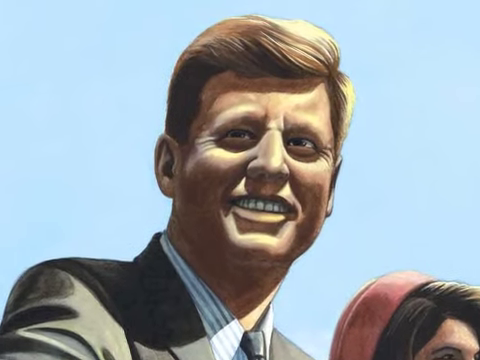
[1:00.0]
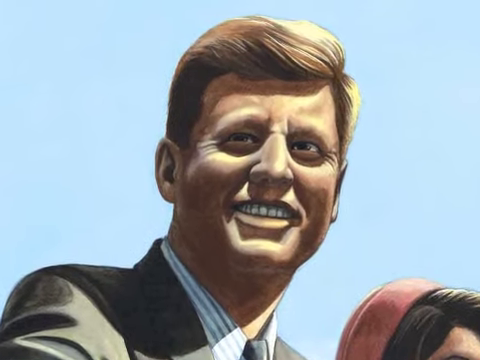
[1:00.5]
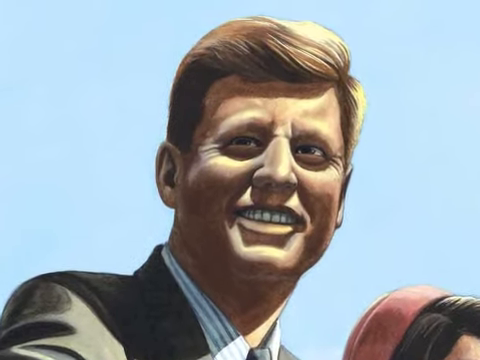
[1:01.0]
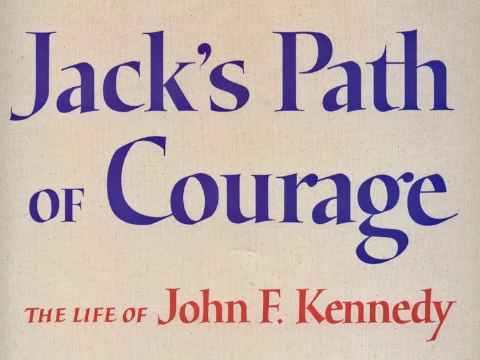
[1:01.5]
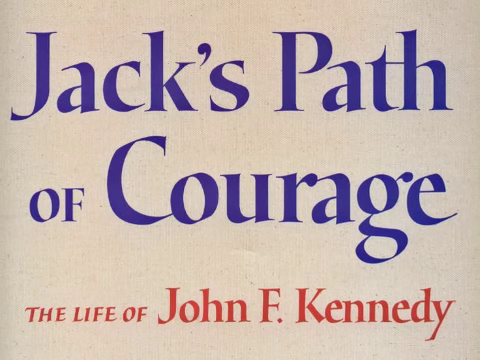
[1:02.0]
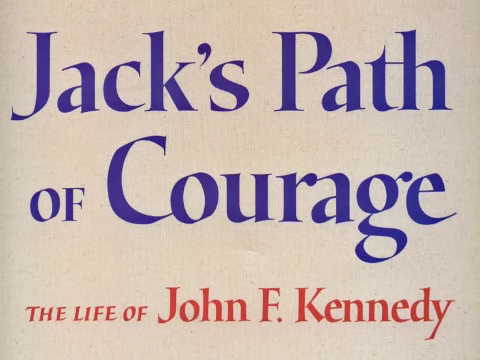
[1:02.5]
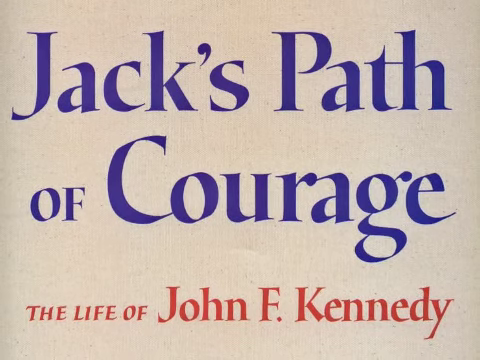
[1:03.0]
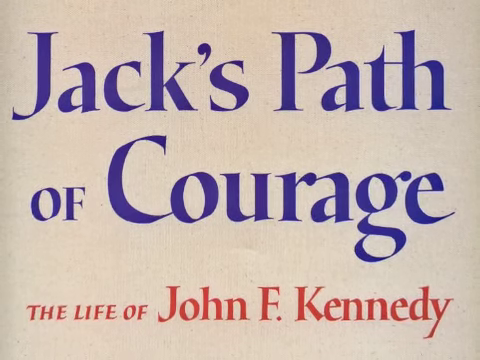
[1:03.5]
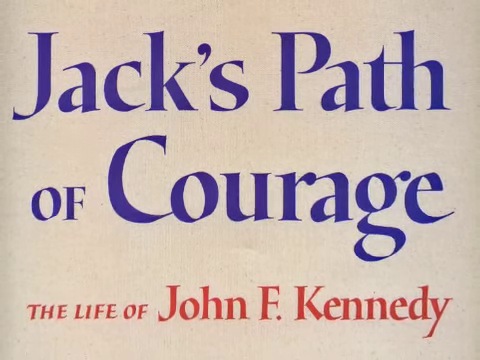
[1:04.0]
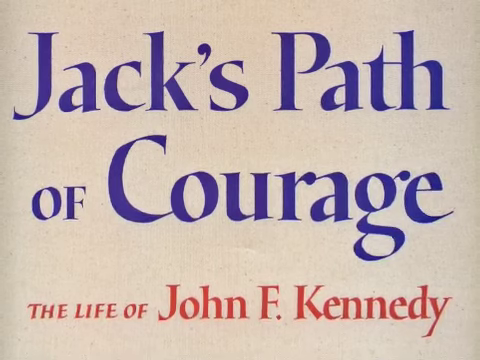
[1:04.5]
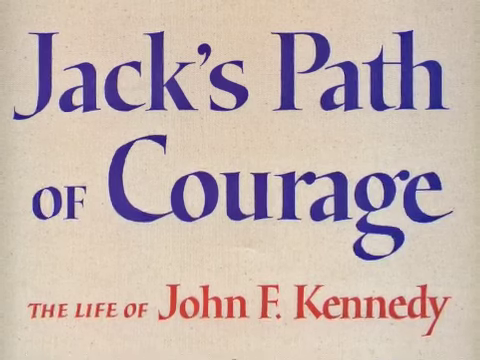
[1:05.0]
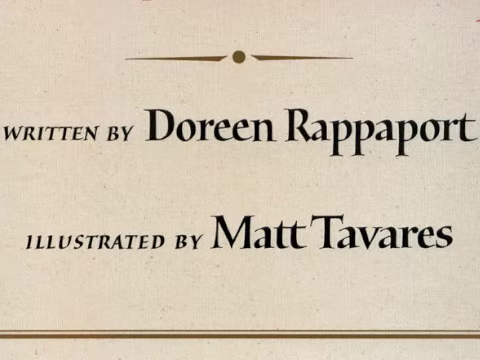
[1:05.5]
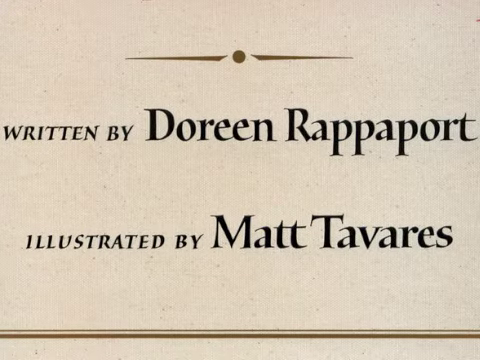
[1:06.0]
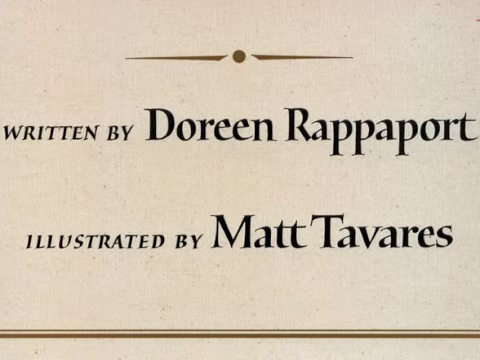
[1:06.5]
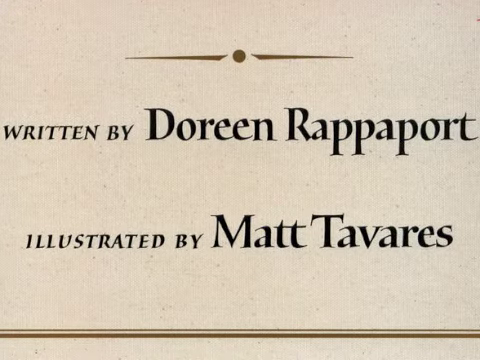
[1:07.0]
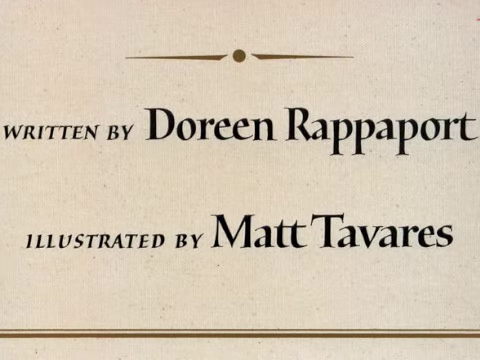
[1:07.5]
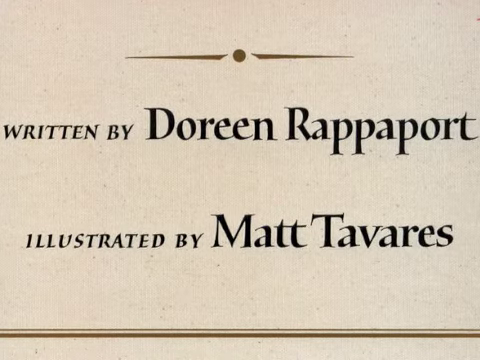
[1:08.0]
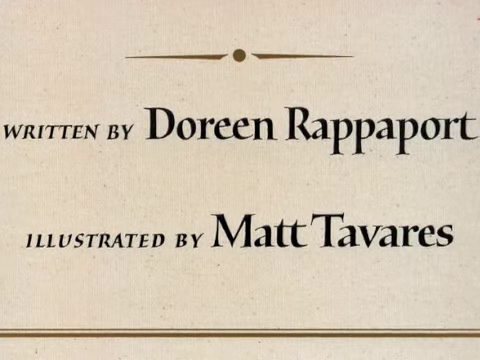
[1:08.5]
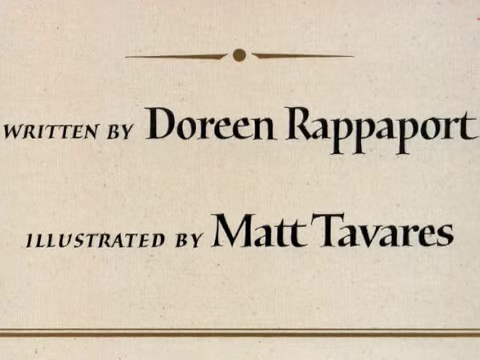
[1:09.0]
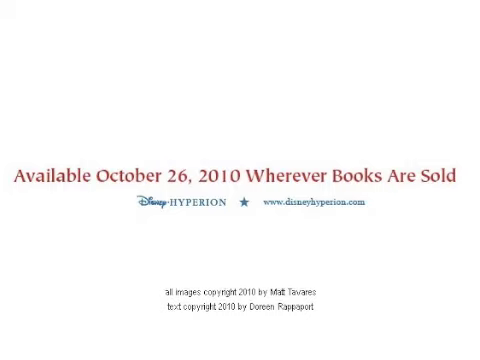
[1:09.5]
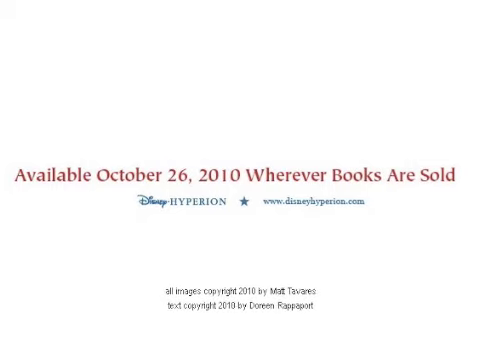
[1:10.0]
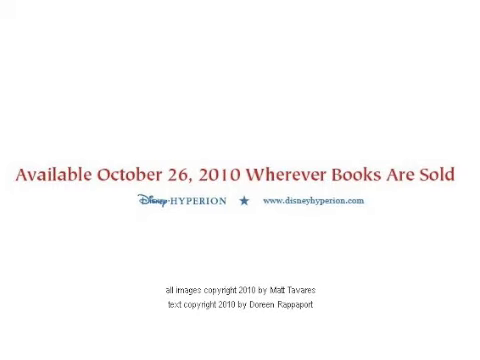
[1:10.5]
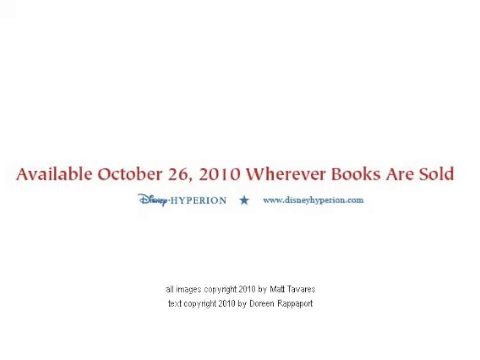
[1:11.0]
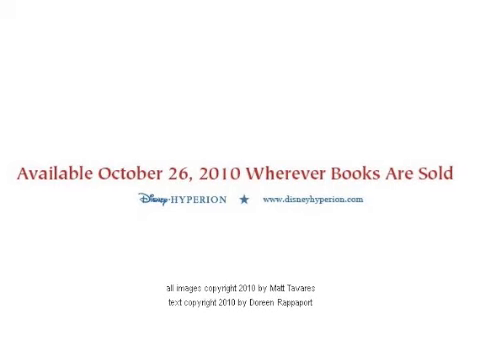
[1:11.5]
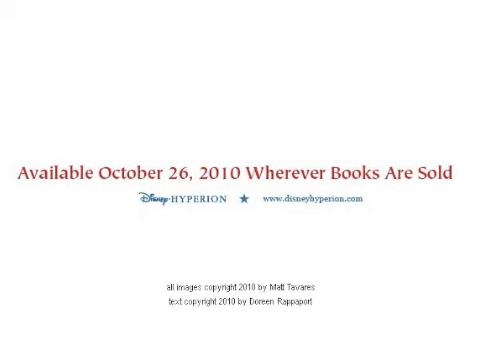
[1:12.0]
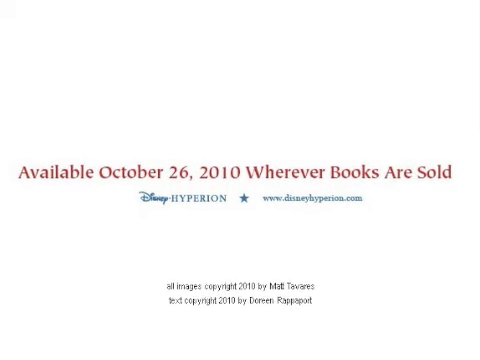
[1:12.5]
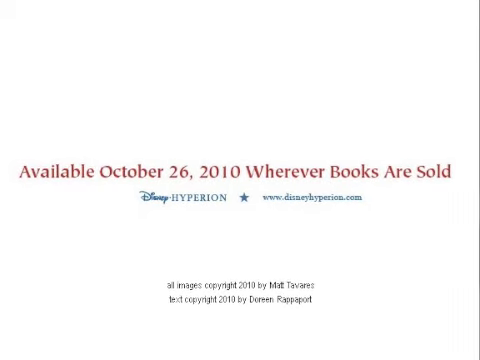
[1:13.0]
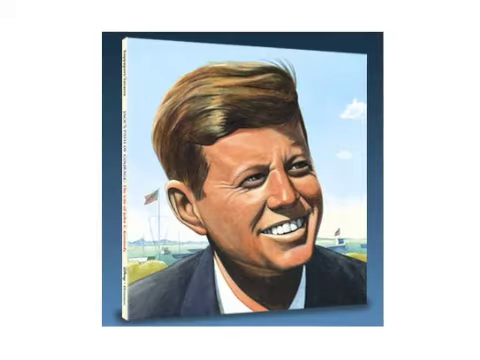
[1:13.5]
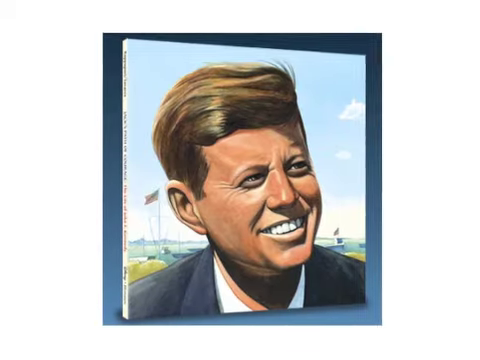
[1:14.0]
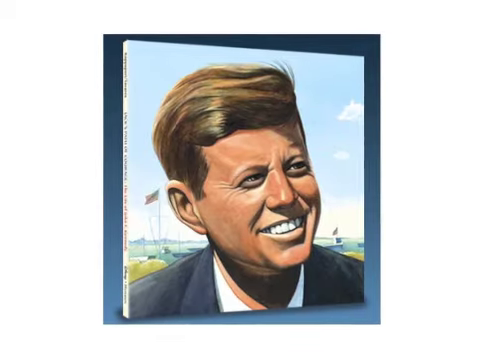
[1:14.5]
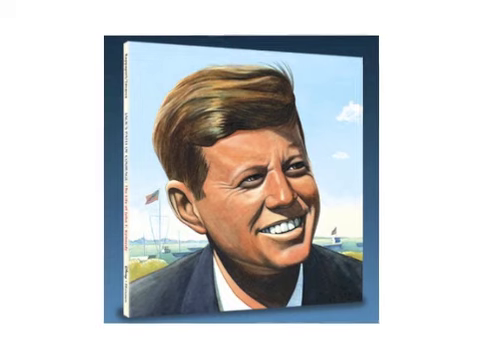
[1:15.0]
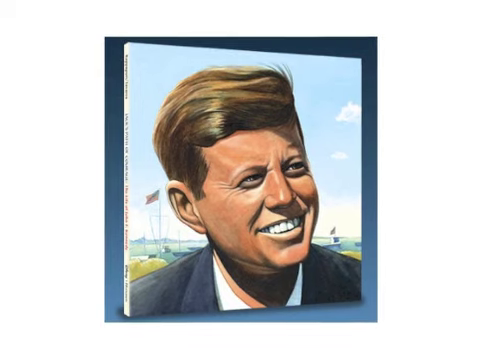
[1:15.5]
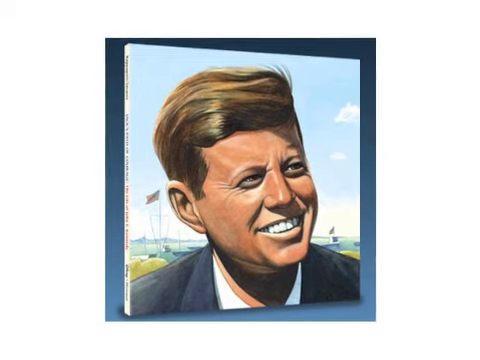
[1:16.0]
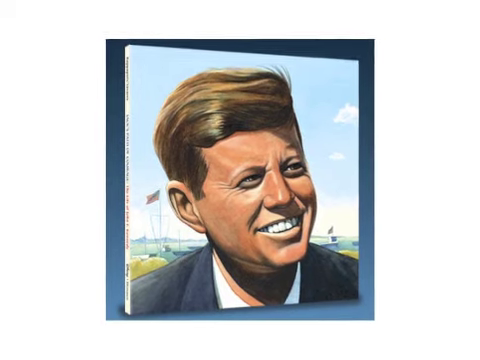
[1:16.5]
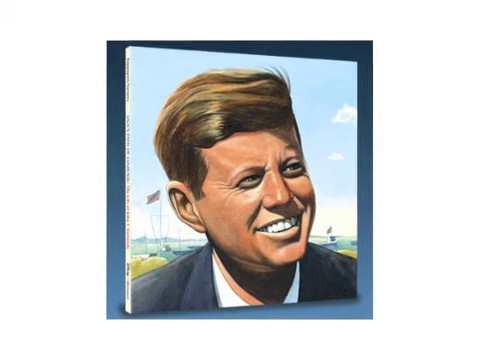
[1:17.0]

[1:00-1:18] A smiling illustration of Kennedy appears with words including "path of courage" in large letters against a beige background, along with "written by Doreen Rappaport, illustrated by Max Tavares." Further text reads "available October 26, 2010, wherever books are sold" and "All images copyright 2010 by Max Tavares, text copyright 2010 by Doreen Rappaport." The words fade away from the screen, revealing the same smiling picture of Kennedy from the beginning, with two American flags behind him and white clouds in the sky. It appears to be a book of some sort releasing in 2010. He wears a blue and white striped shirt, and Jackie Onassis' red hat is next to him; she has dark hair.